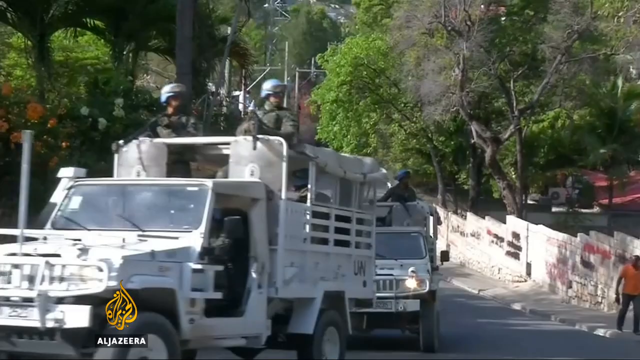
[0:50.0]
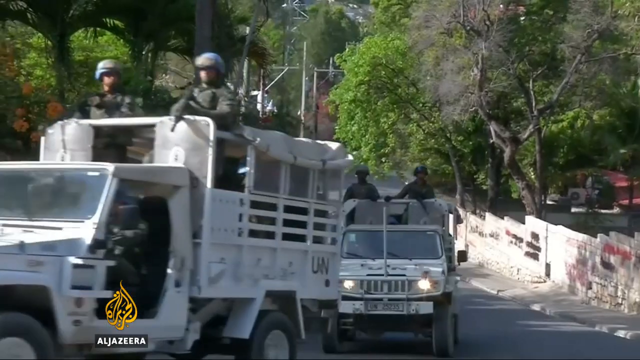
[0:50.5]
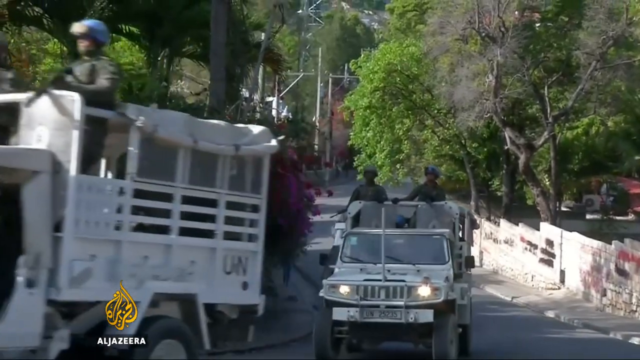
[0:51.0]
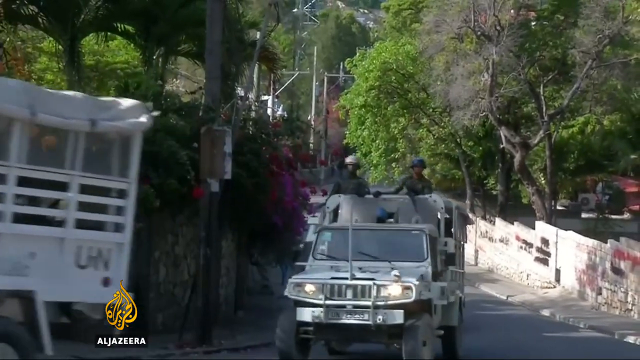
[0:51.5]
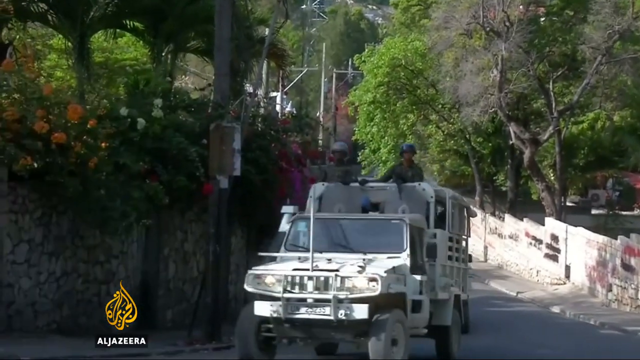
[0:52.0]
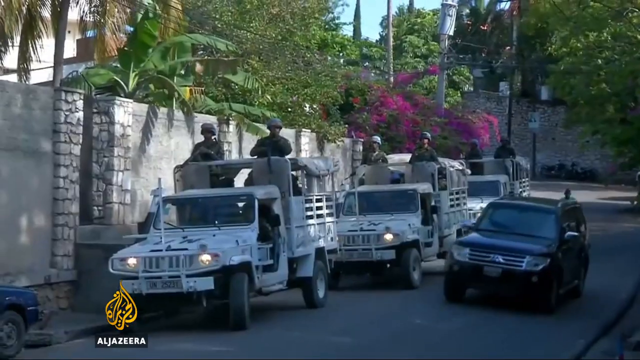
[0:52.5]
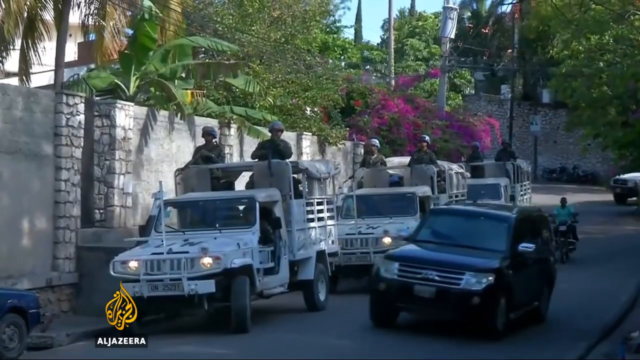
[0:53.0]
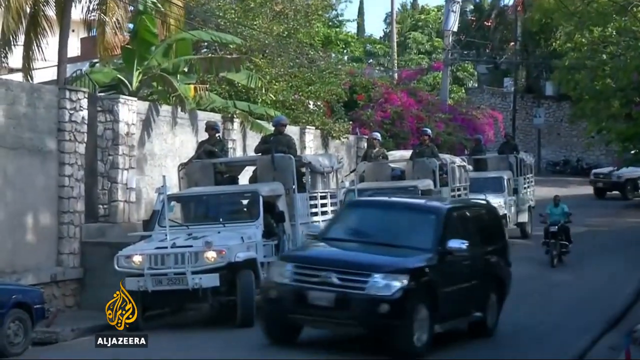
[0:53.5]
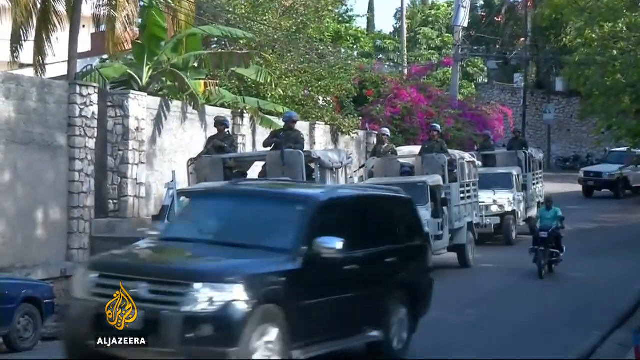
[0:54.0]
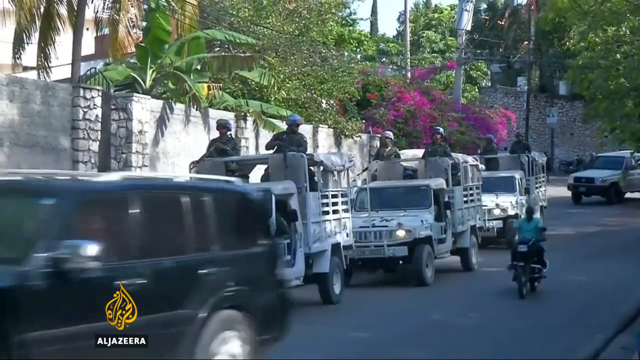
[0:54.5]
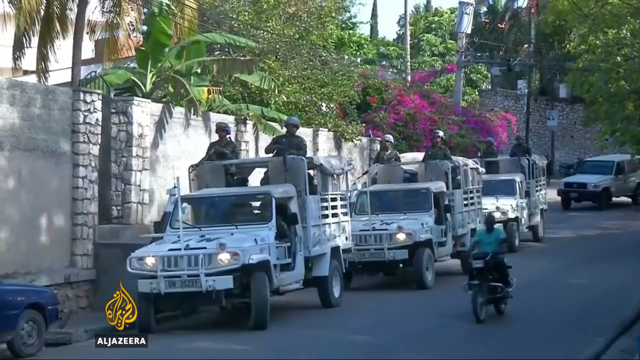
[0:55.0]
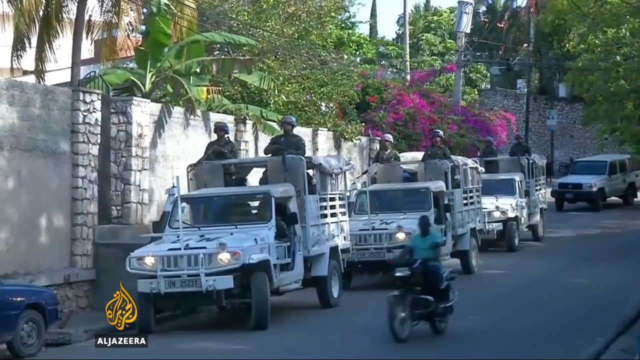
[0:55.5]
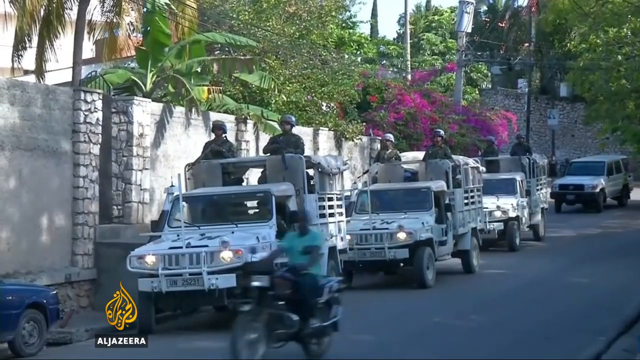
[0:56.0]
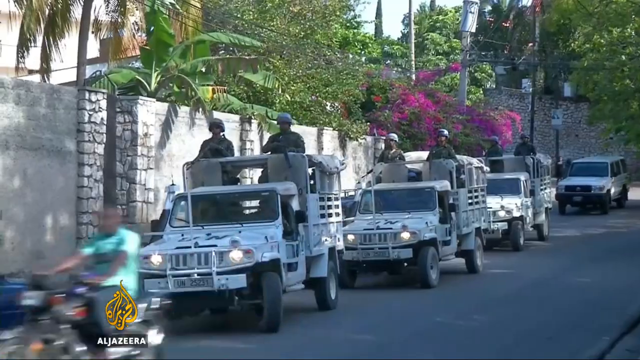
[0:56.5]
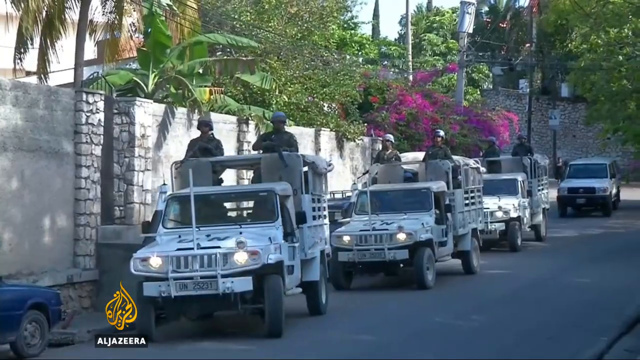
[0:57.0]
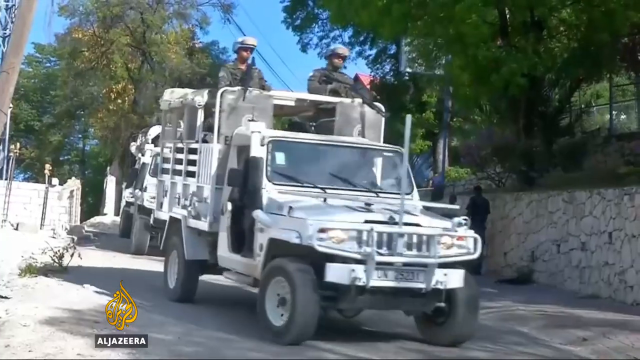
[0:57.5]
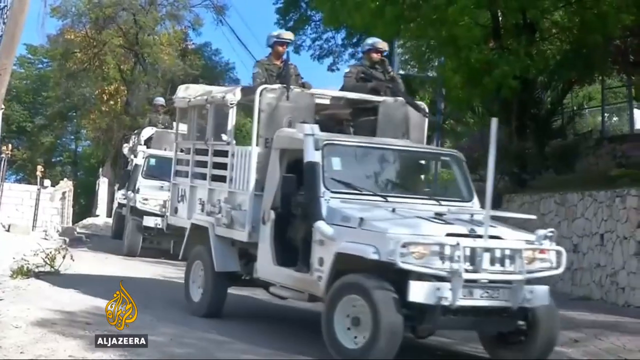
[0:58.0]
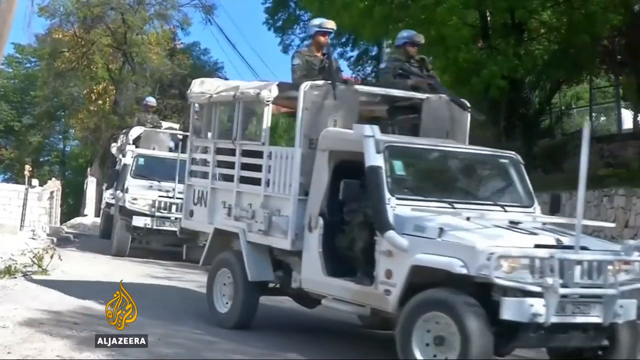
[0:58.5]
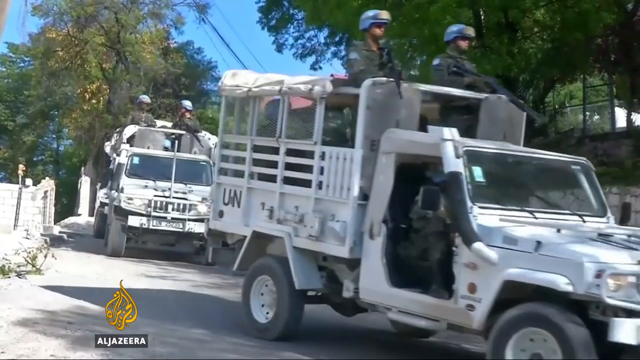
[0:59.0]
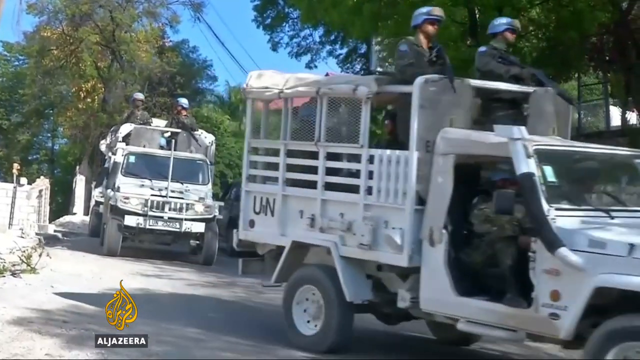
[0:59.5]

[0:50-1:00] The convoy continues, now with the sides of the jeep-like vehicles open; the vehicles have enclosed backs. Men stand looking out the top in the back, holding rifles or long guns. There appear to be three army vehicles, all white, with visible license plates and the letters UN on the back. The street has traffic of regular vehicles and some motorcycles, in what appears to be a residential area. Text in the upper left corner says "Al Jazeera is funded in whole or in part by the Qatari", and some suggested videos are shown. It is an Al Jazeera video about Haiti's plans to revive the military.